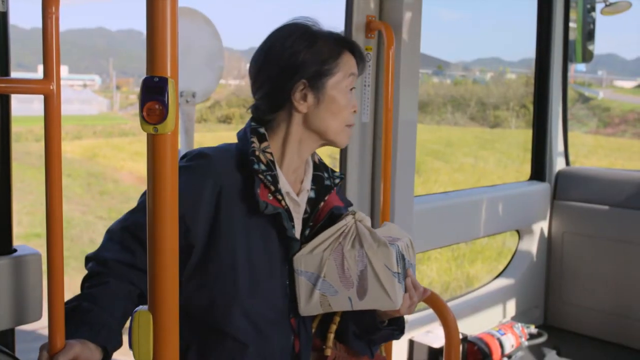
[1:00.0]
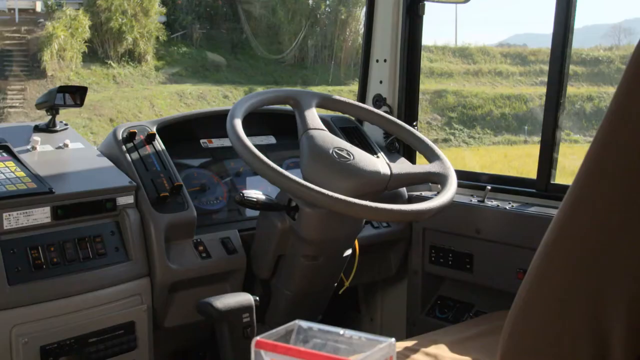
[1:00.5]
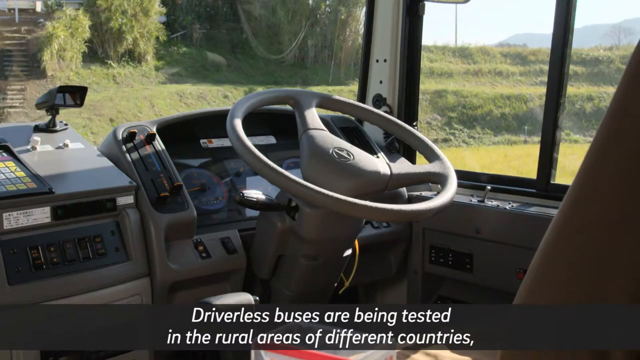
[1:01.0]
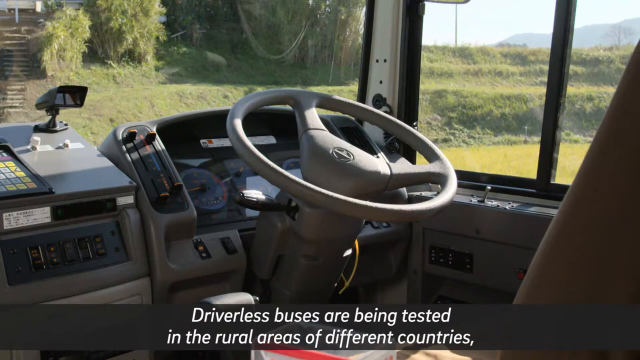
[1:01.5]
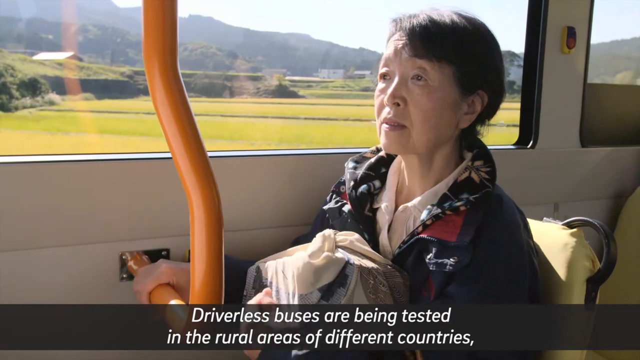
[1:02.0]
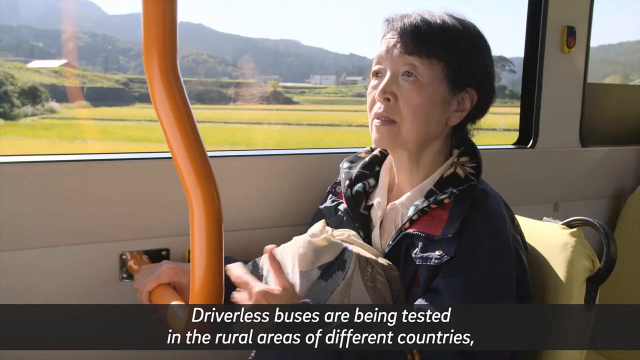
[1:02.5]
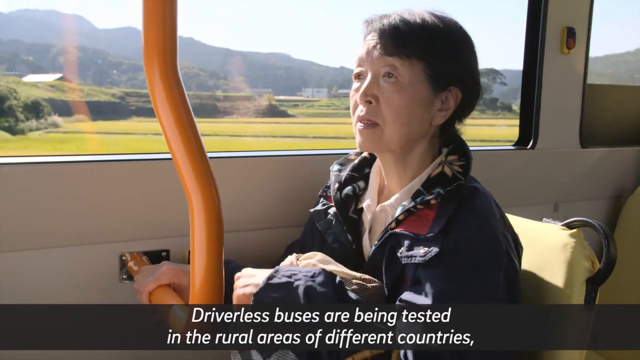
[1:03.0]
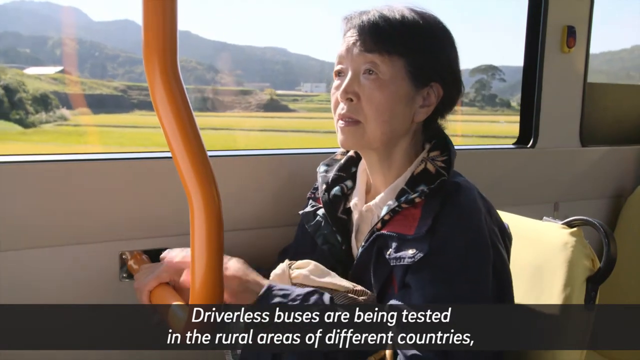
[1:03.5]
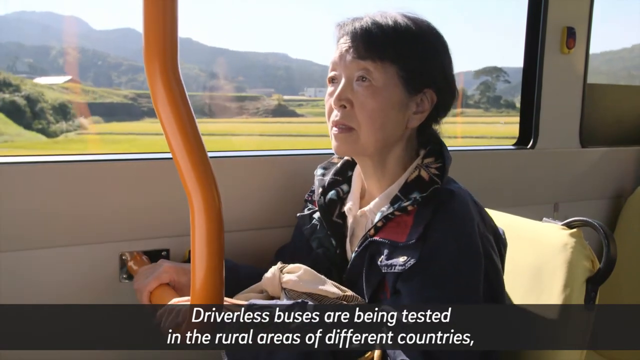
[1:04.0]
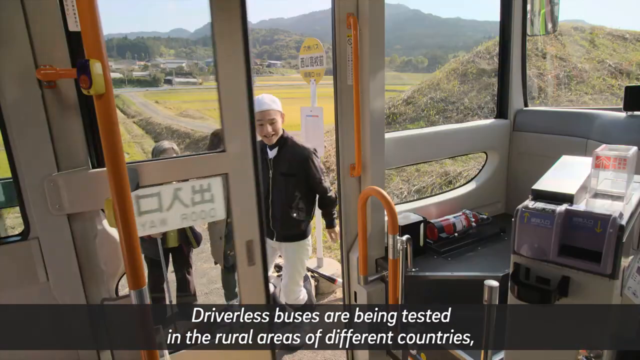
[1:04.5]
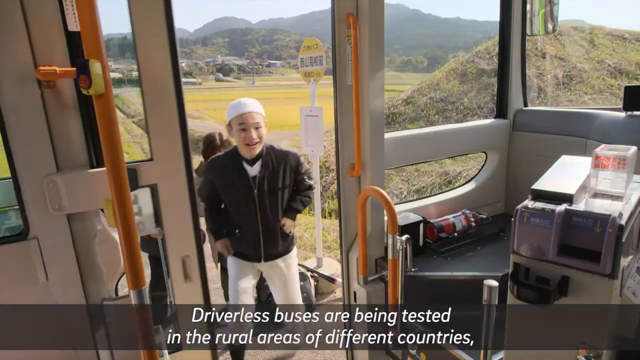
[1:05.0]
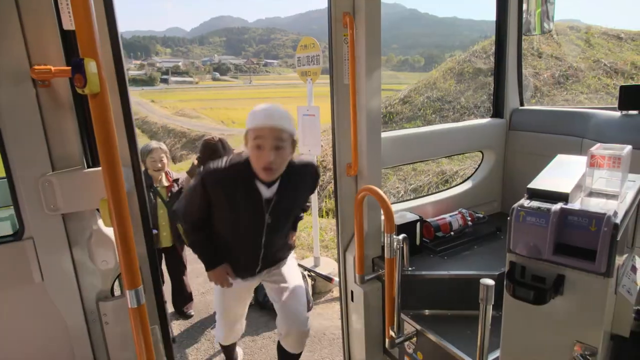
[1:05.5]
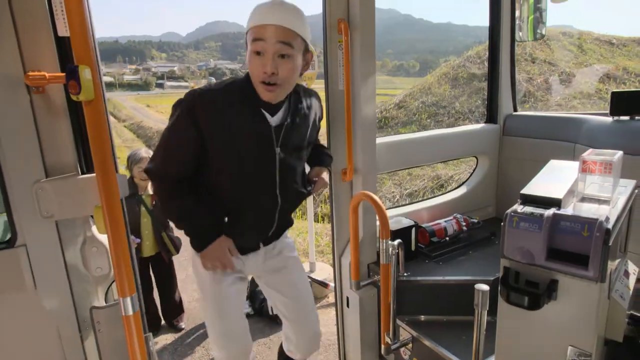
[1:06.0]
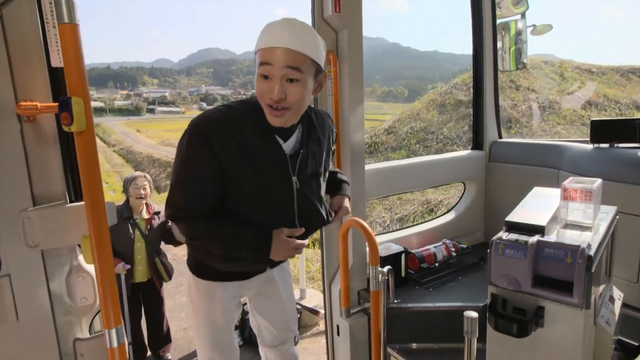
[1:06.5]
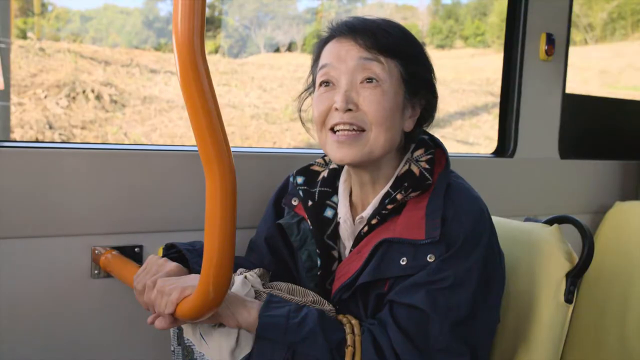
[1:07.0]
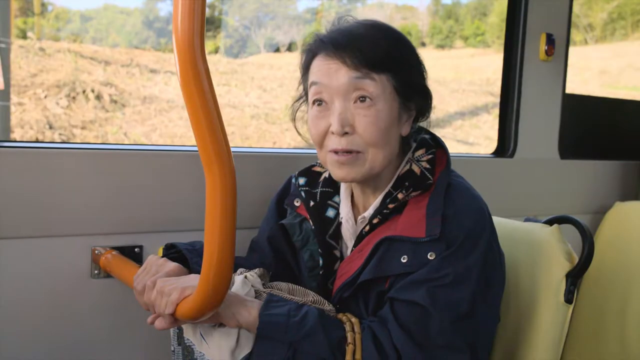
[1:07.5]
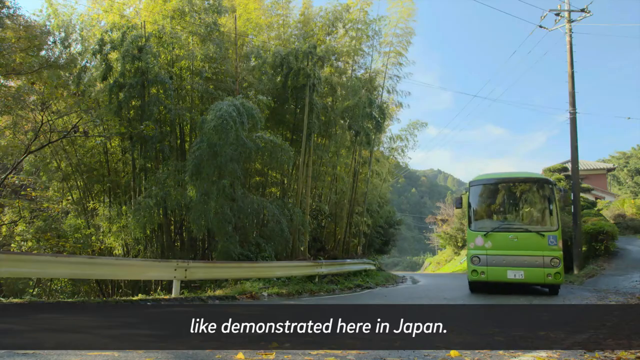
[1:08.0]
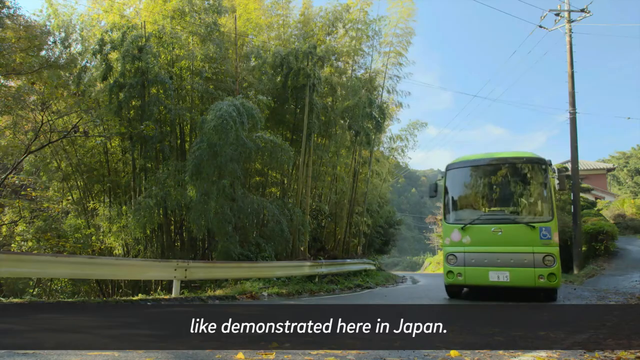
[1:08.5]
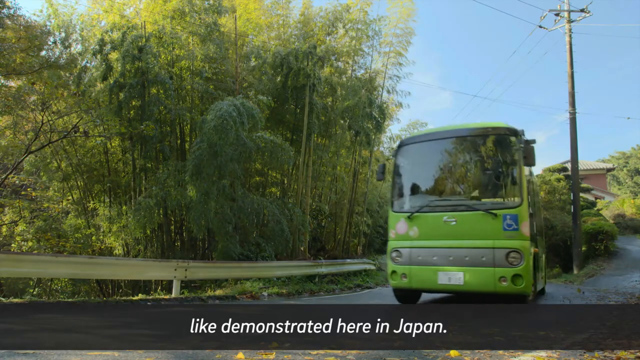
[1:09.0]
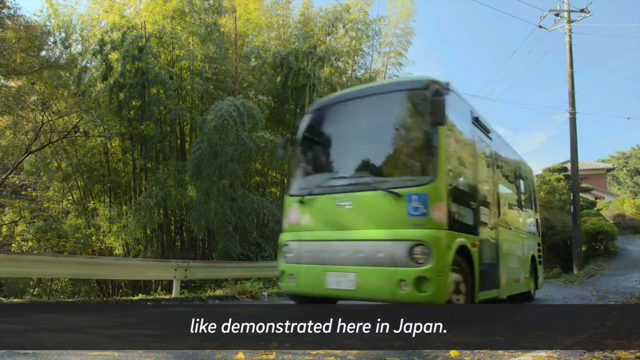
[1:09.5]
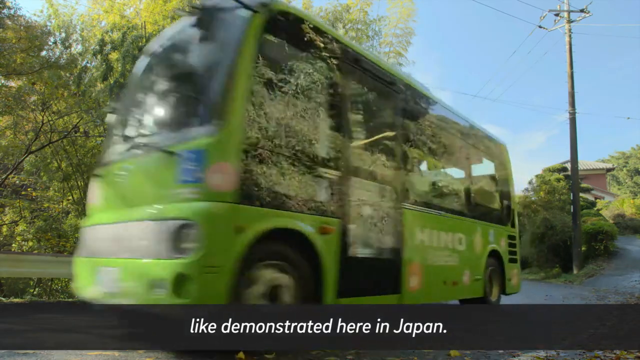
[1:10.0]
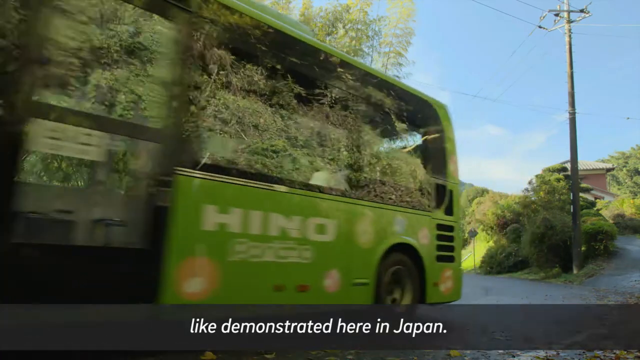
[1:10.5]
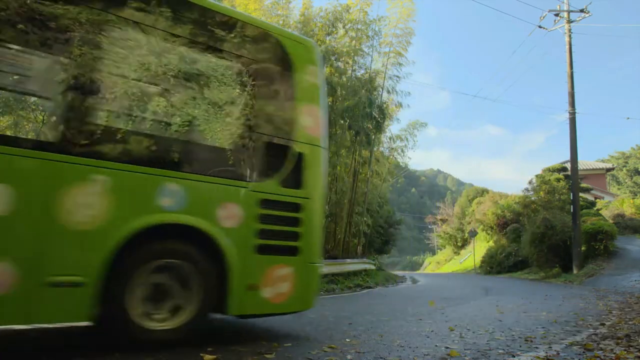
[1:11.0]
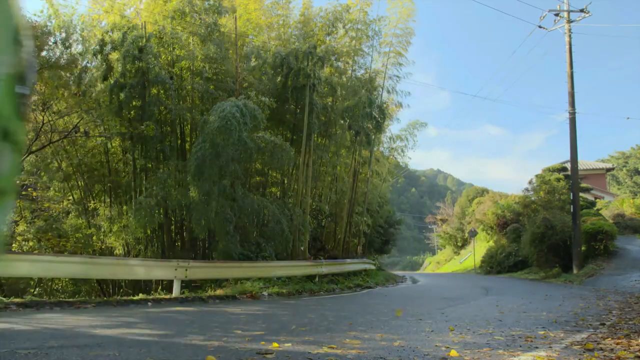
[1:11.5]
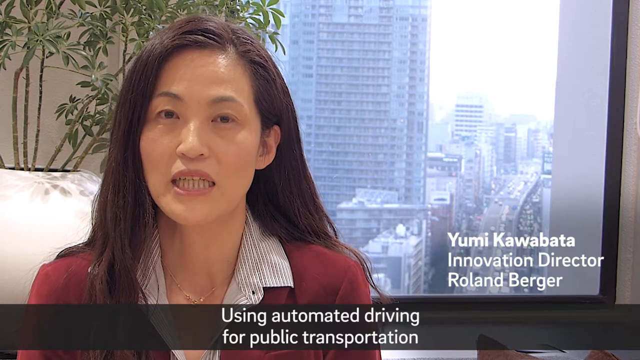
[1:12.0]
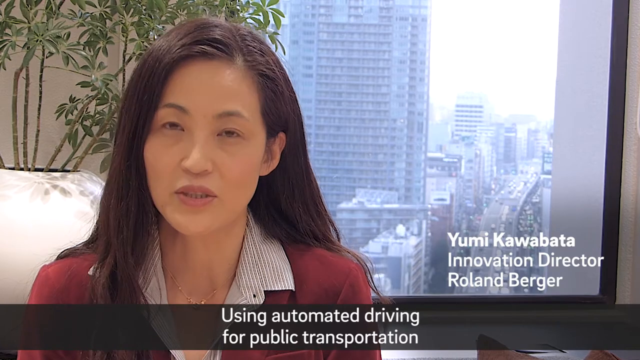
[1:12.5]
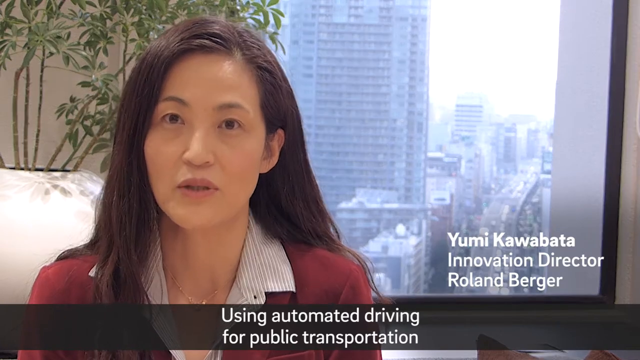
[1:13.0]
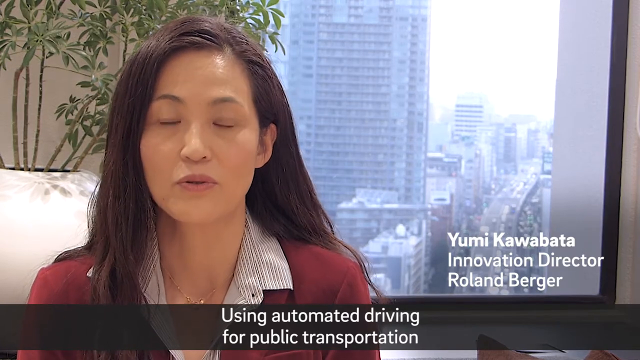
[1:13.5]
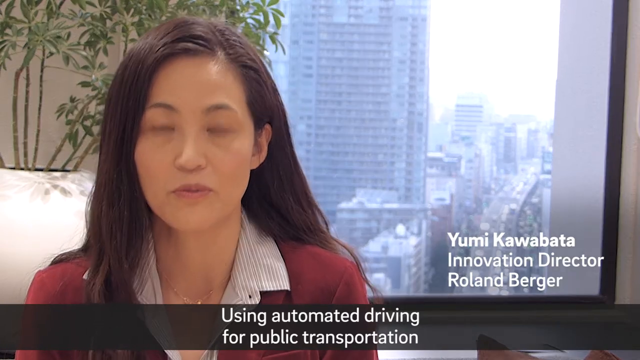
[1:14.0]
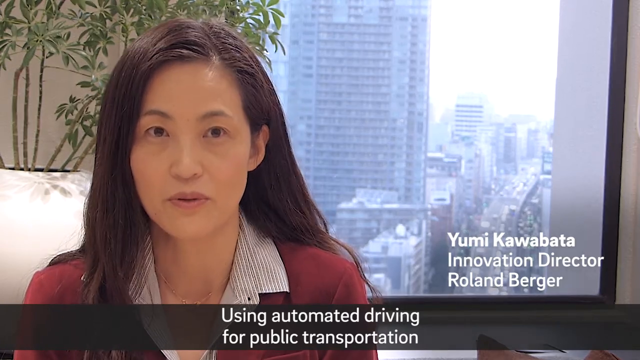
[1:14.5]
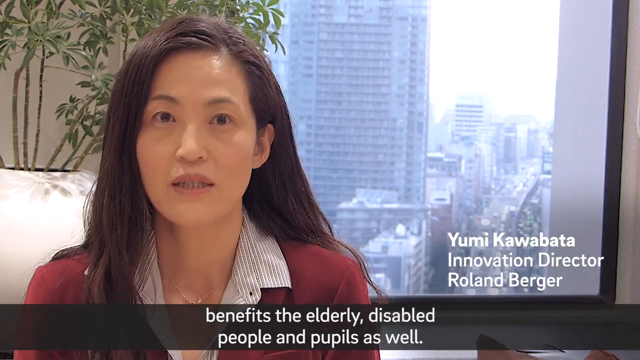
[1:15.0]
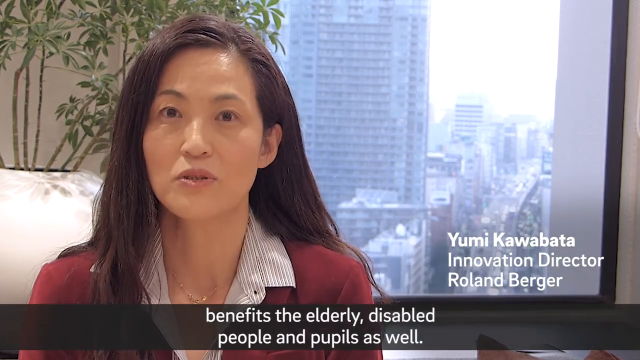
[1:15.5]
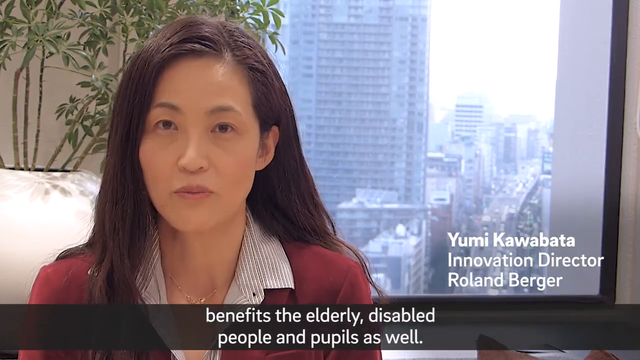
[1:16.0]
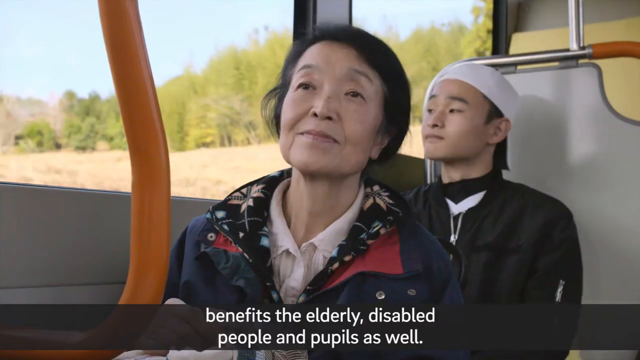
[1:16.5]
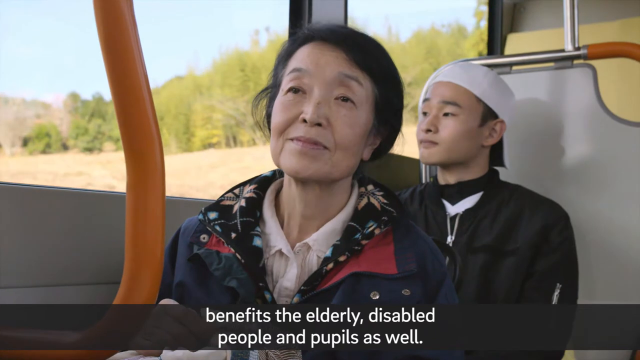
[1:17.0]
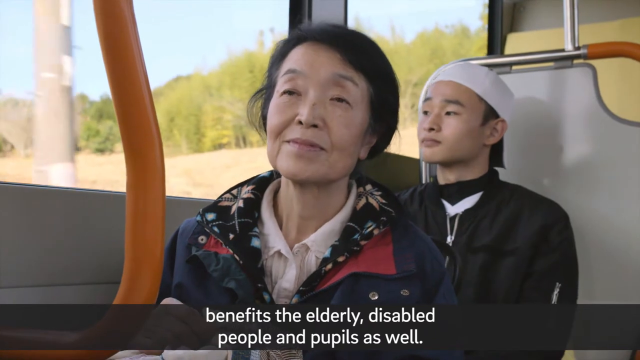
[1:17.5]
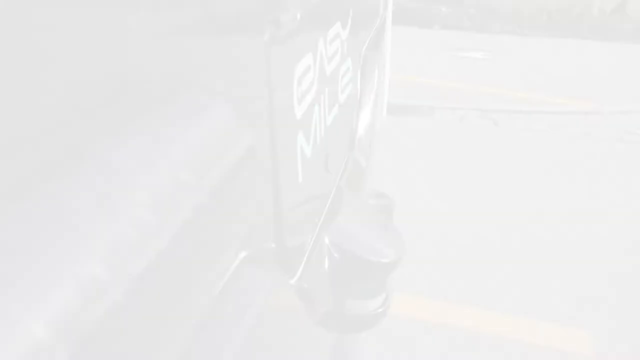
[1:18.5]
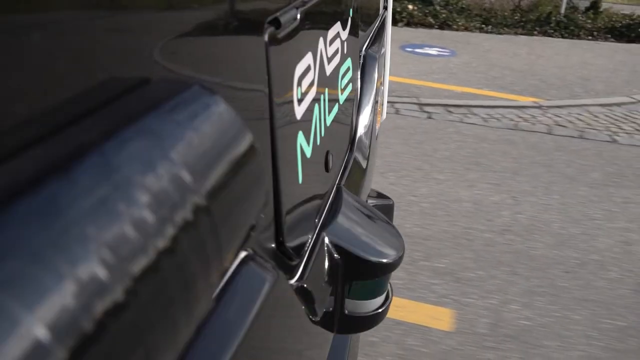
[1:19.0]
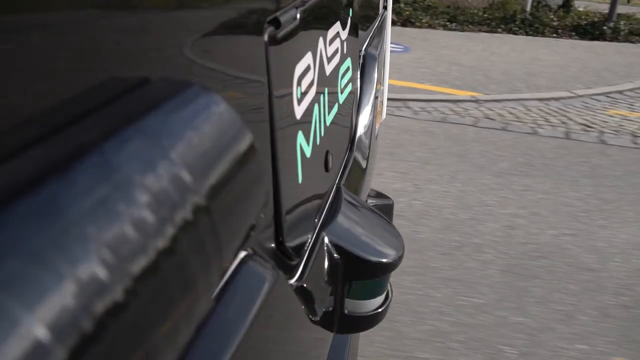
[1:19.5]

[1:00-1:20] There is no driver in the driver's seat and the bus moves on its own. Text reads "driverless buses are being tested in rural areas of different countries, like demonstrated here in Japan." This bus is mostly green. Text continues "using automated driving for public transportation." A woman on the left side of the screen, wearing what looks like a red blazer, faces the camera; text identifies her as "Yumi Kawabata," with "innovative iteration director" beneath it and "Roland Berger" below that. Text then says there are benefits for elderly and disabled people and pupils as well.